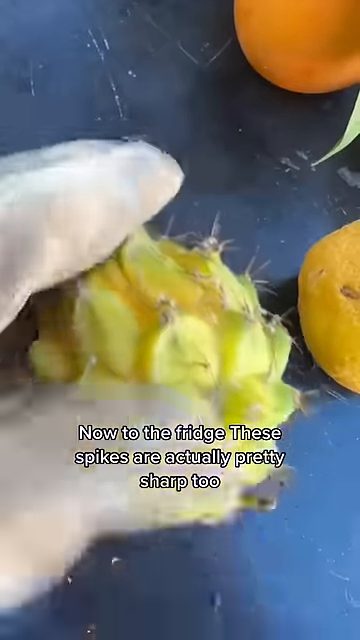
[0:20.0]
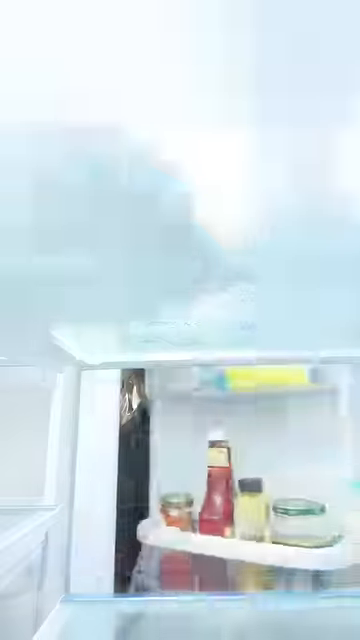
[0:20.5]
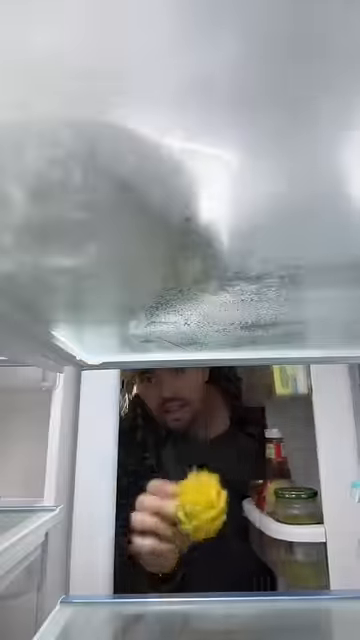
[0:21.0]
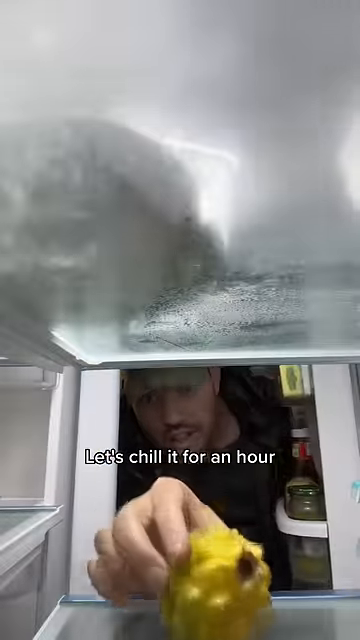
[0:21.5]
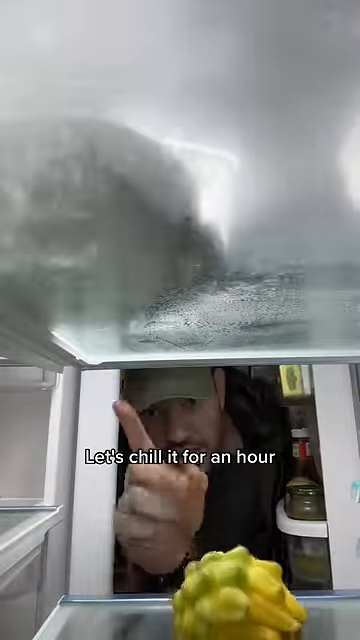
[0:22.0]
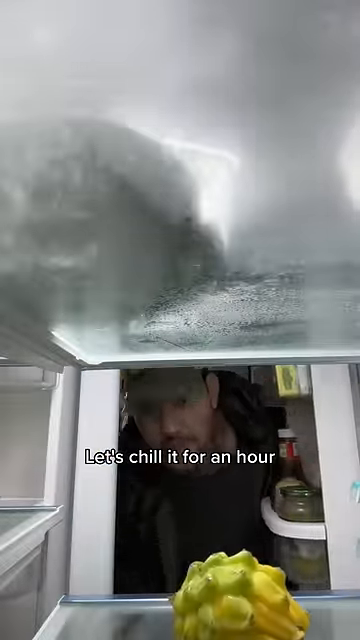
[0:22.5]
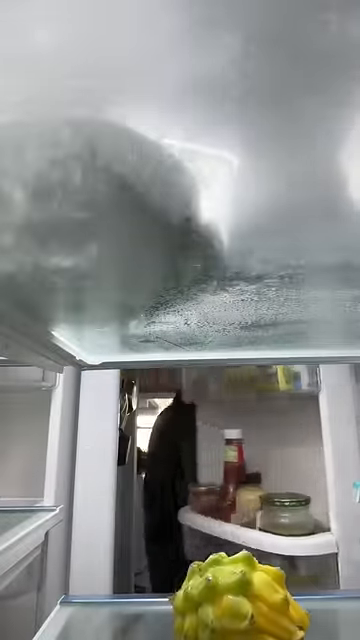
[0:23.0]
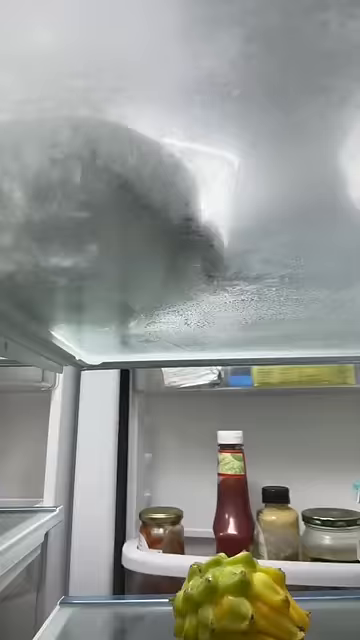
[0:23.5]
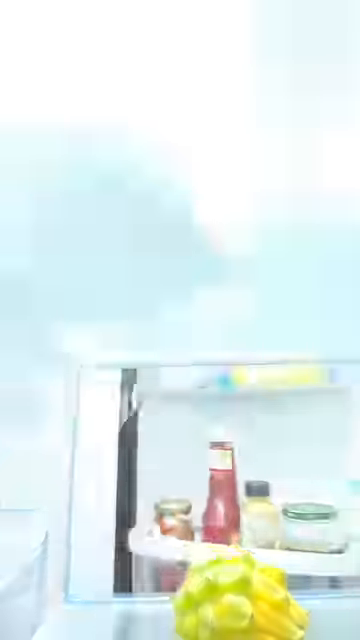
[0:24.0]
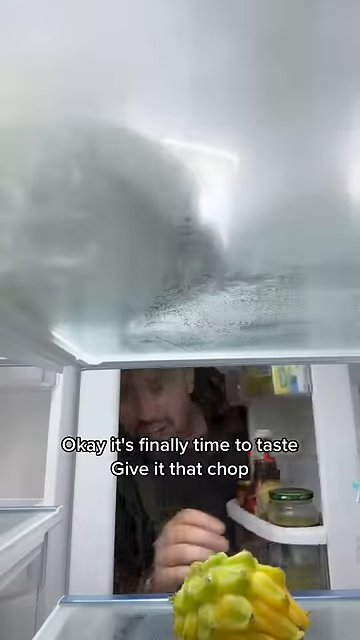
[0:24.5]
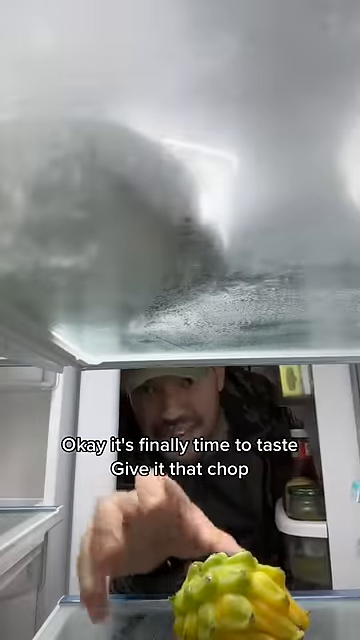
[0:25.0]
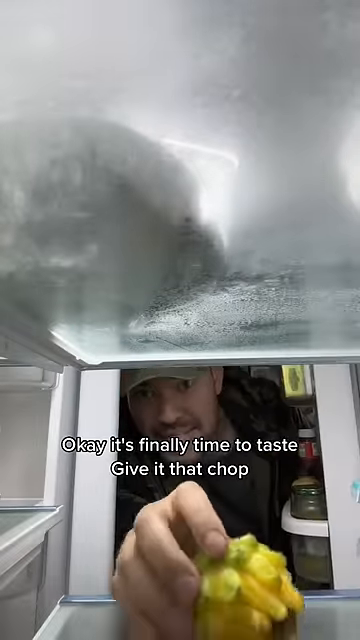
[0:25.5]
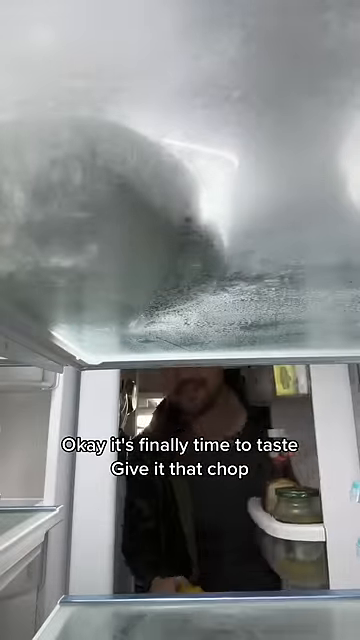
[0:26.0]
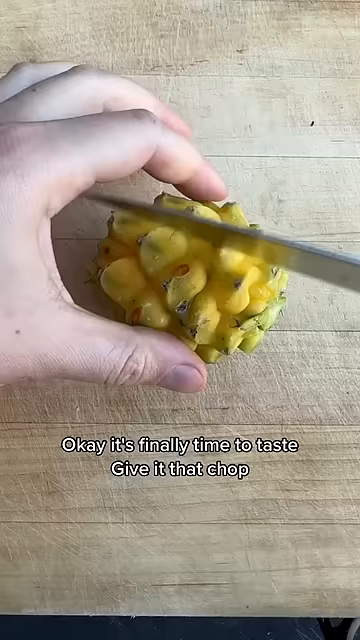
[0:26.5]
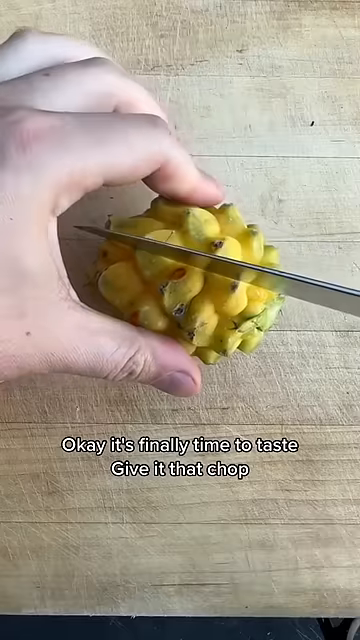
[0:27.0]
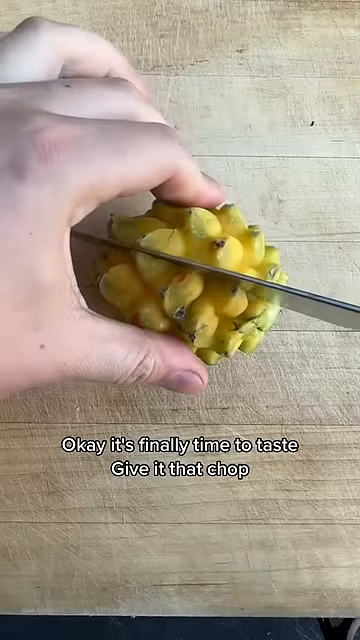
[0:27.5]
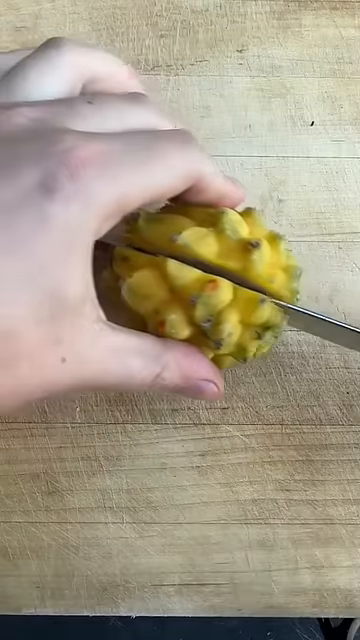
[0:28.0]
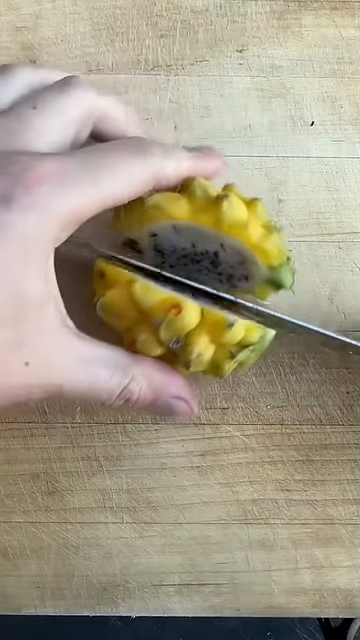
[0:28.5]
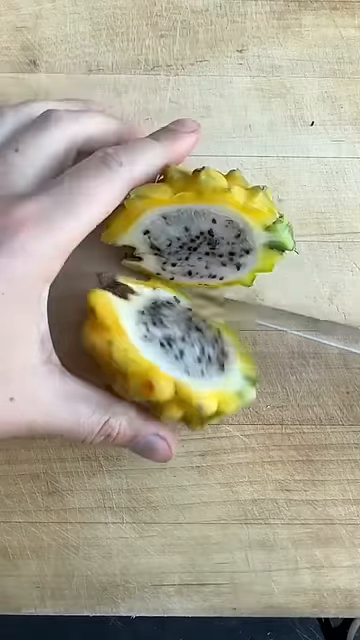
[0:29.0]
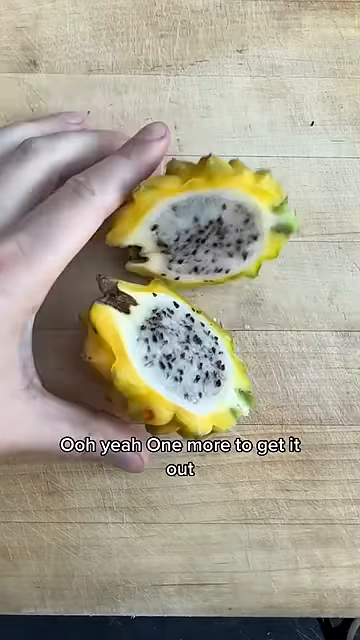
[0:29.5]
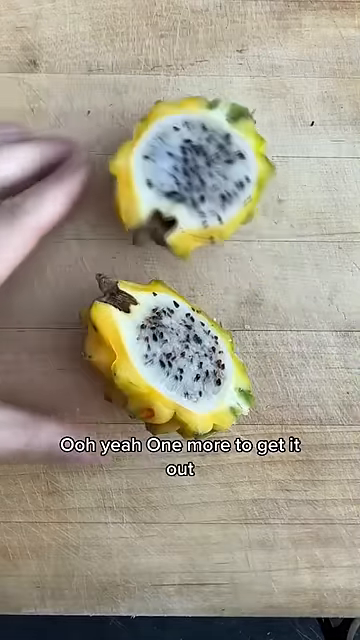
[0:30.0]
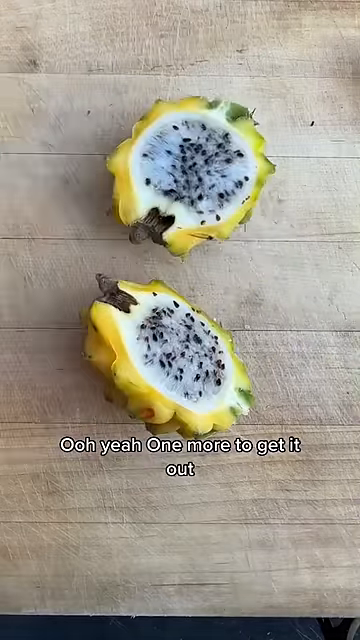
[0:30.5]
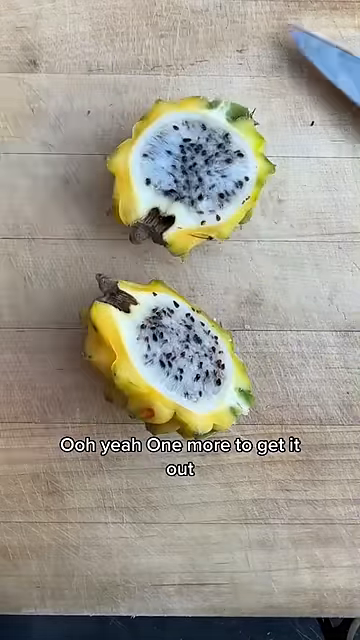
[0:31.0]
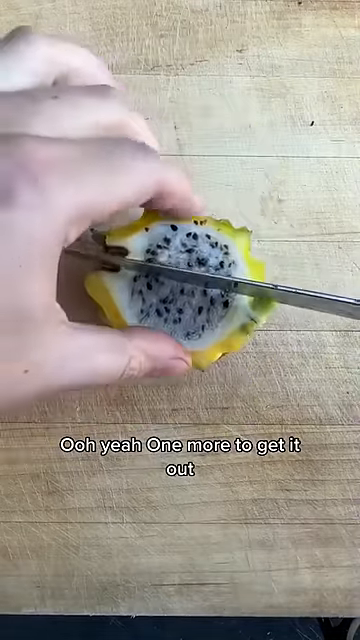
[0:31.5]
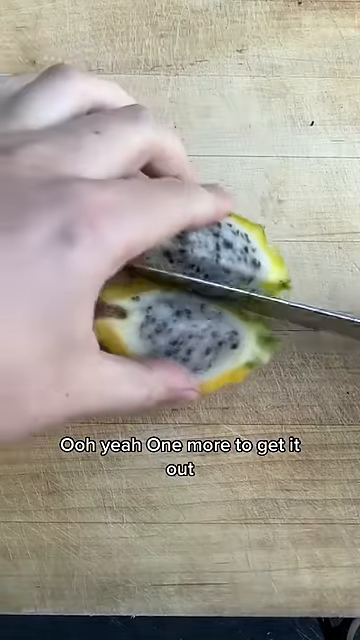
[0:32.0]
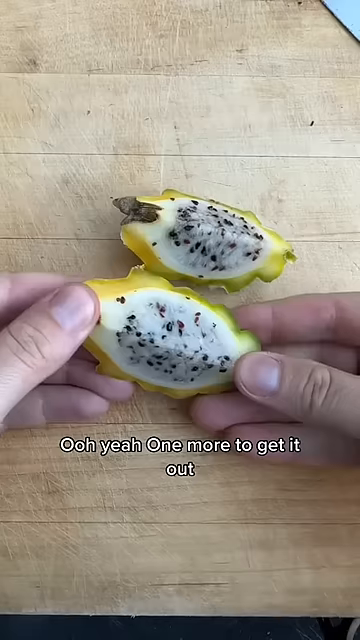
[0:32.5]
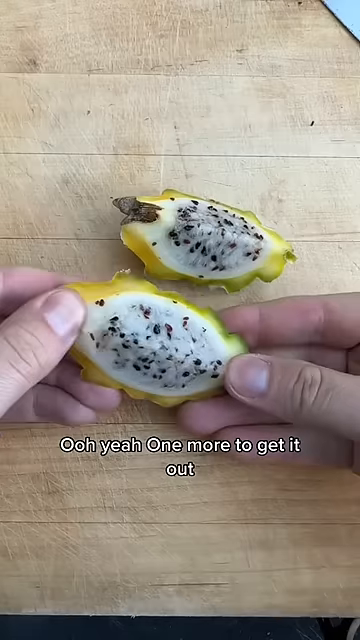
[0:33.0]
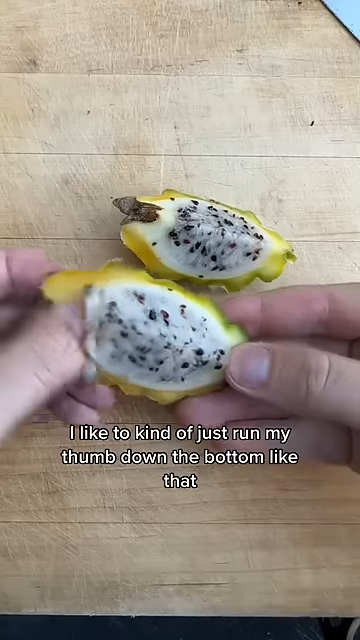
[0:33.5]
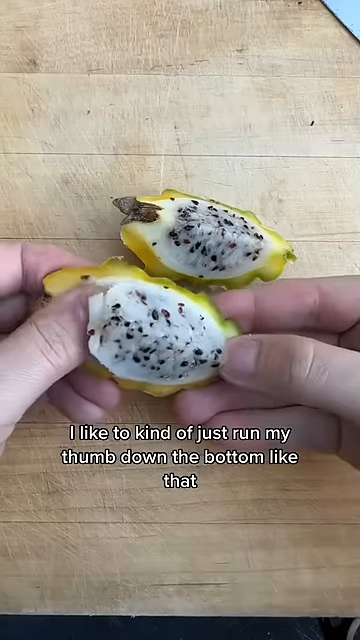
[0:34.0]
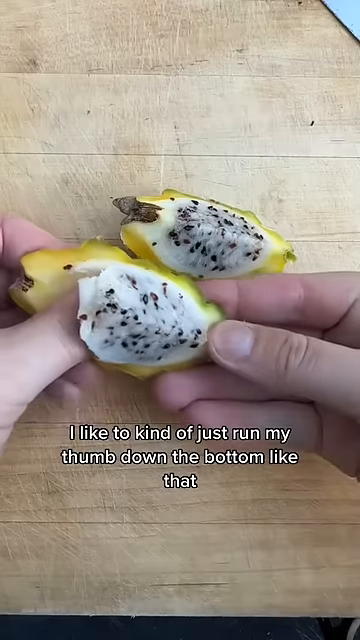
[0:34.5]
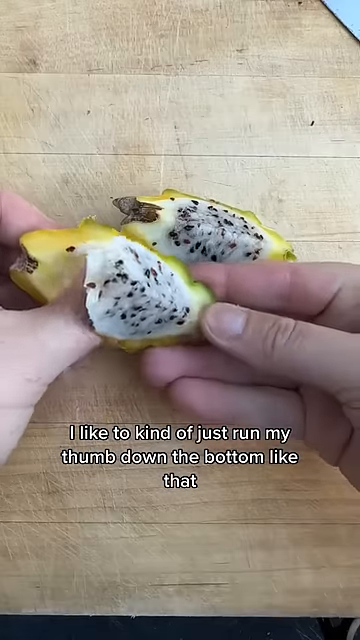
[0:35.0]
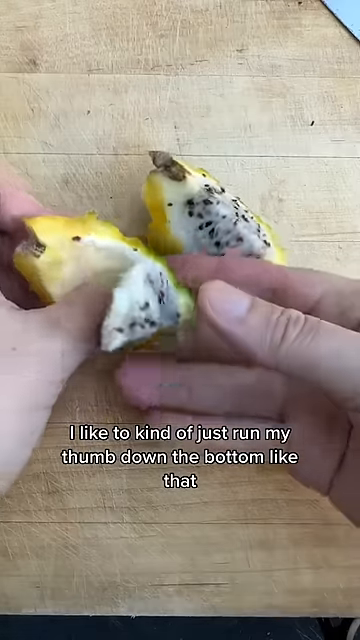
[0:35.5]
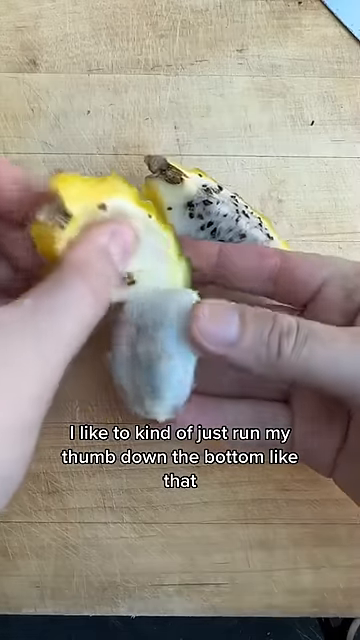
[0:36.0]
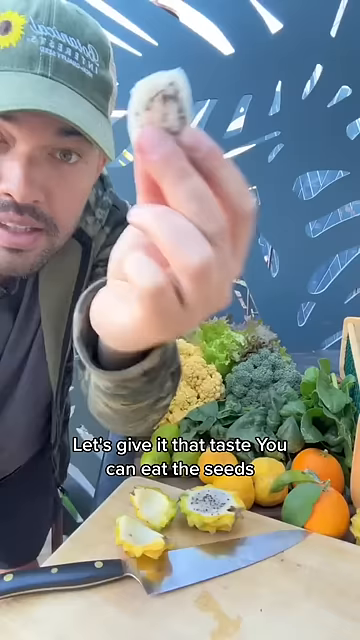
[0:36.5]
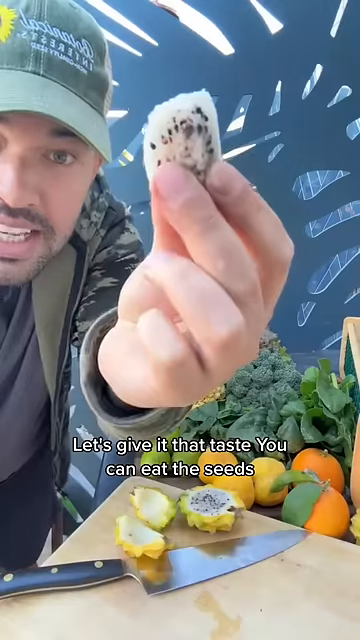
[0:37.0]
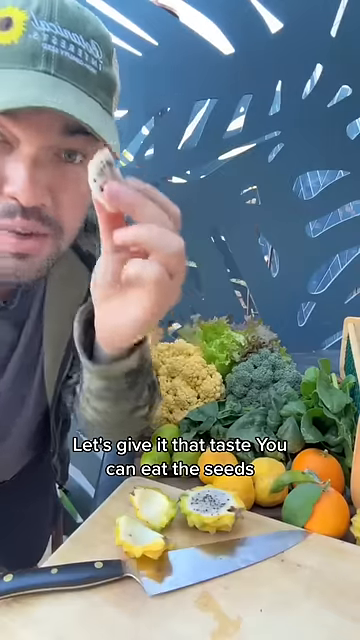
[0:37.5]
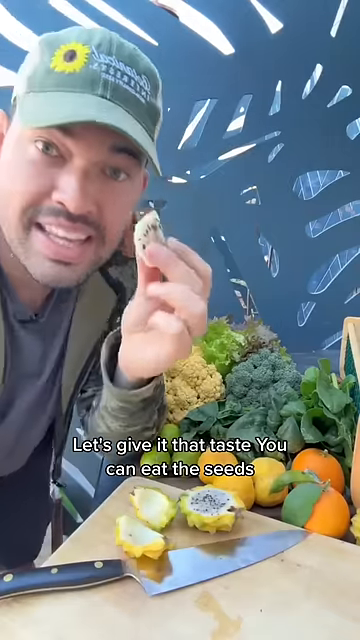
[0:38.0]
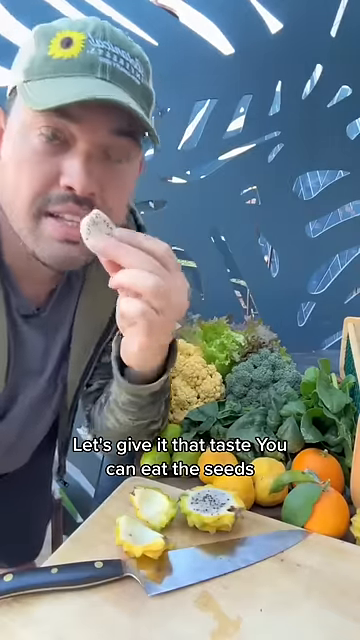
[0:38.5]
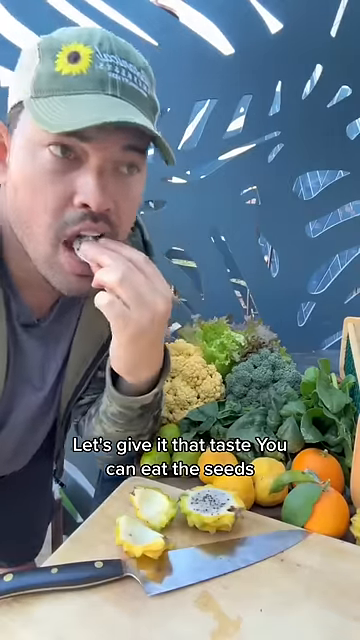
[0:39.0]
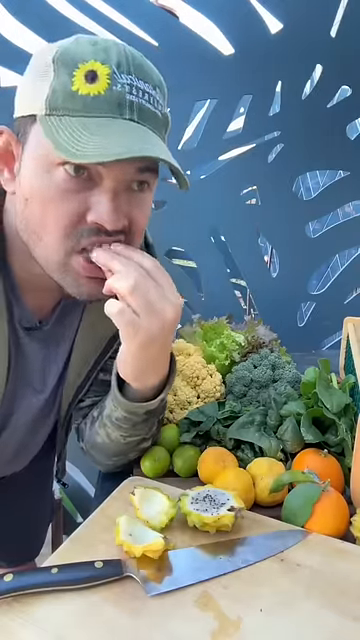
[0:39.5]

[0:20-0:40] The man opens his refrigerator, and a shot from inside the refrigerator shows him putting the dragon fruit plant inside, with a subtitle that says "let's chill it for an hour". He then opens the refrigerator again to take it out, suggesting the hour has passed, and the subtitle now says "okay it's finally time to taste, give it that chop". A top-down view shows the dragon fruit on a wooden cutting board, the man holding it with his bare left hand as a blade cuts through the middle. He slices it in half and lays the exposed inside toward the camera; it looks almost like a coconut with black seeds inside. He cuts those pieces in half again, scrapes out the white insides of one piece with his left thumb, and takes a bite out of that piece.